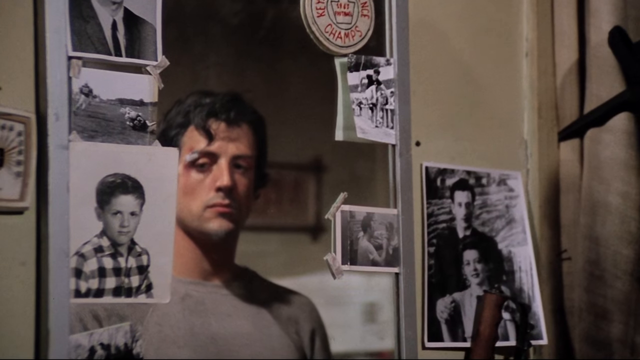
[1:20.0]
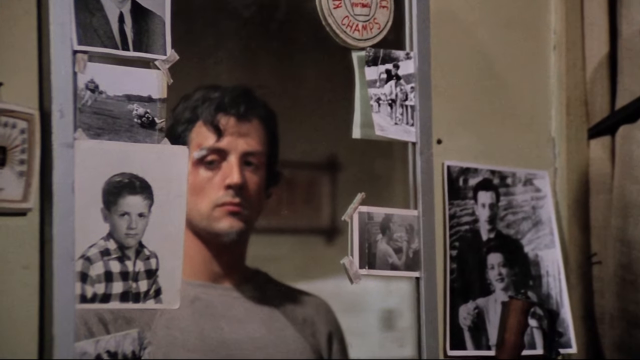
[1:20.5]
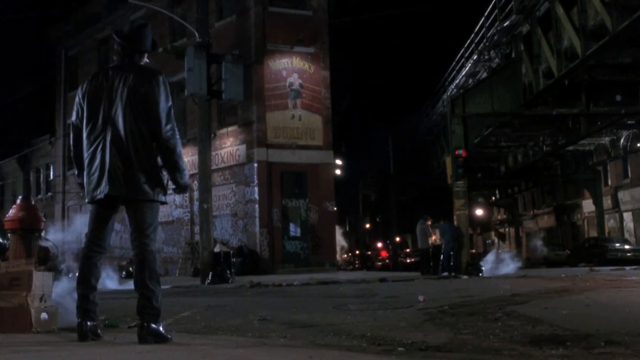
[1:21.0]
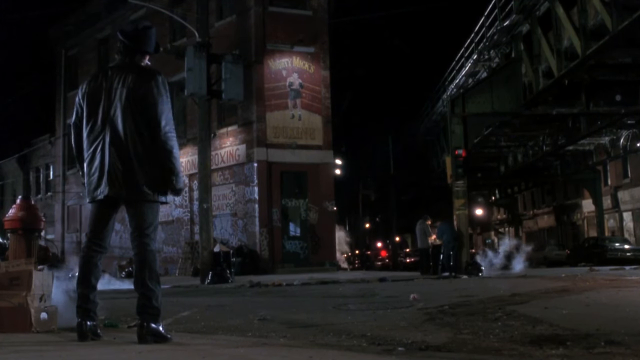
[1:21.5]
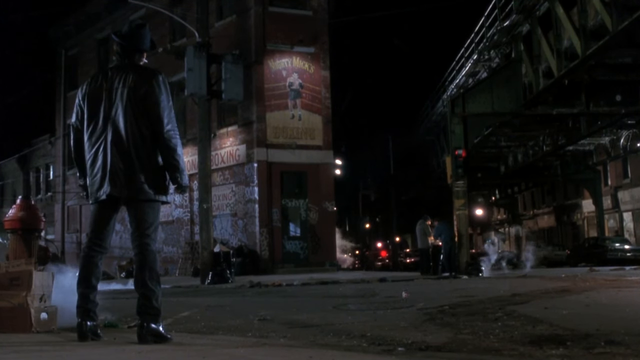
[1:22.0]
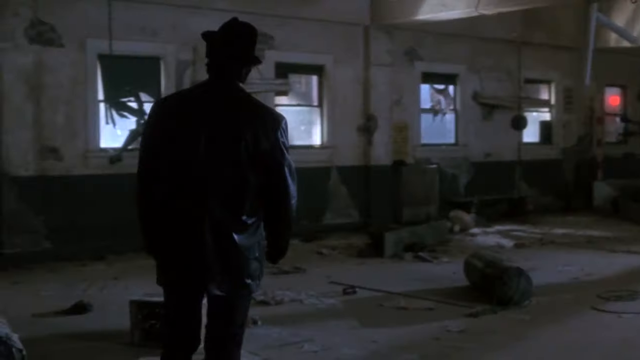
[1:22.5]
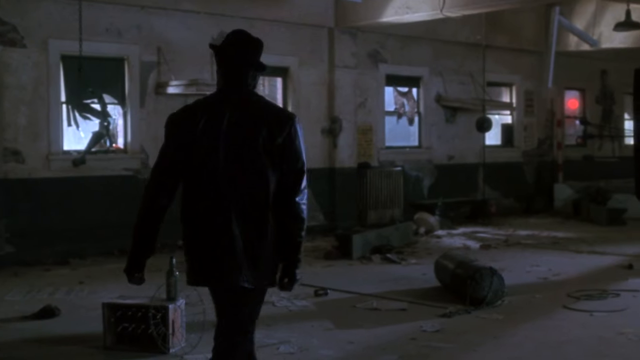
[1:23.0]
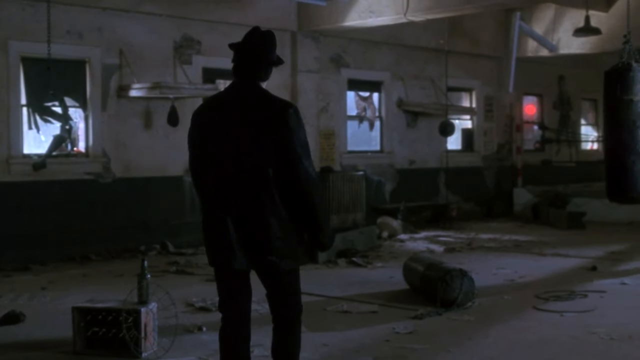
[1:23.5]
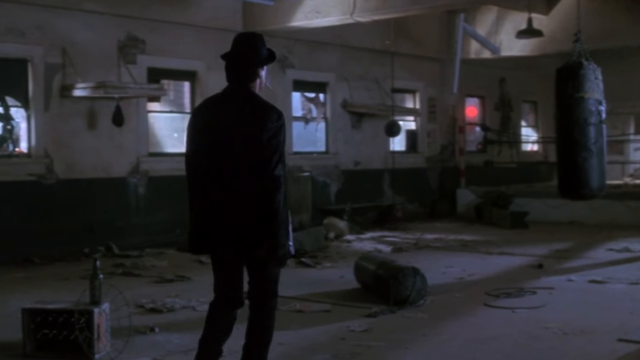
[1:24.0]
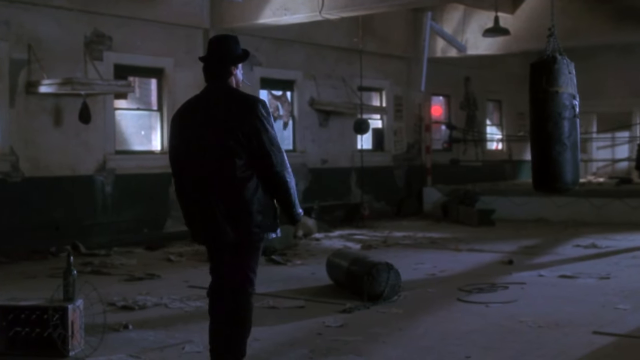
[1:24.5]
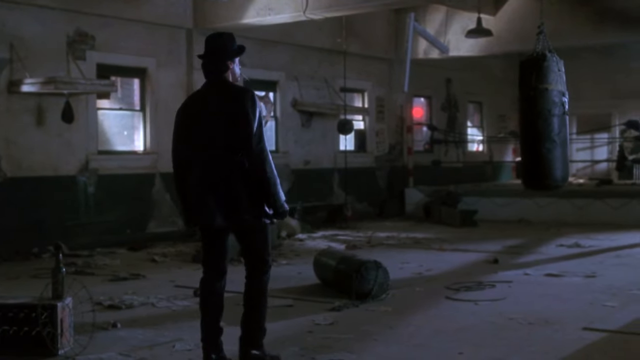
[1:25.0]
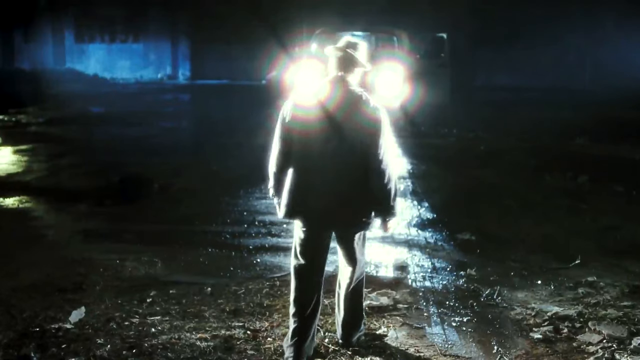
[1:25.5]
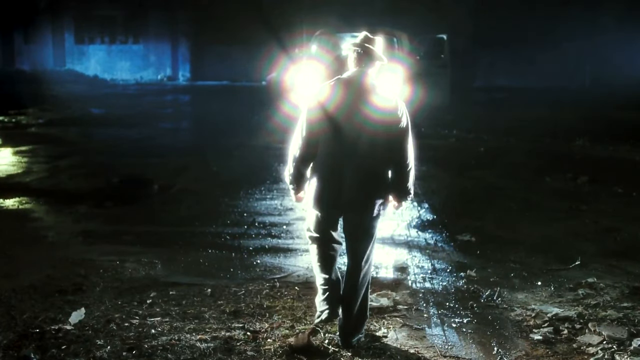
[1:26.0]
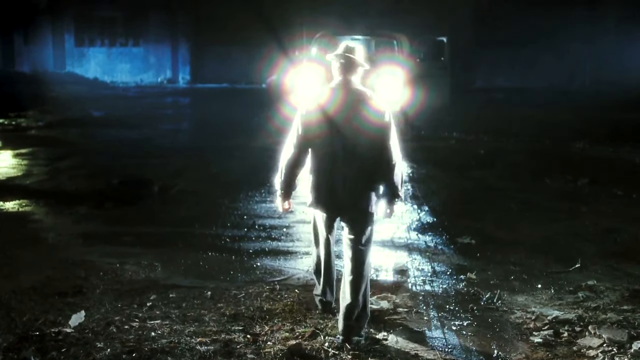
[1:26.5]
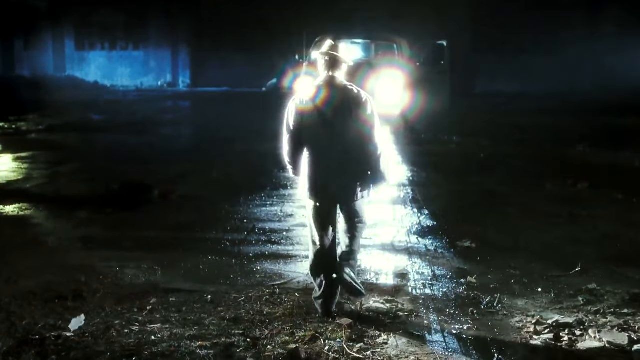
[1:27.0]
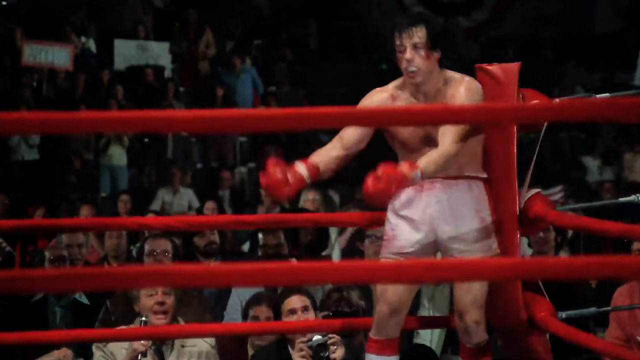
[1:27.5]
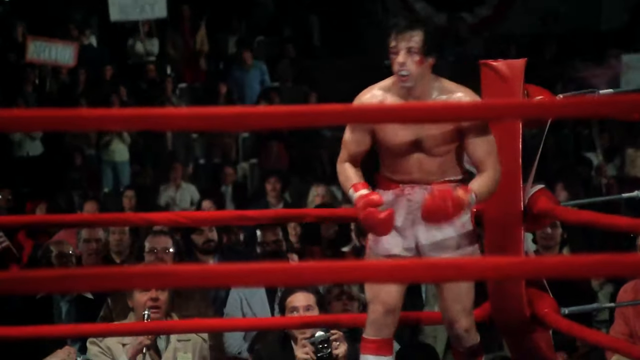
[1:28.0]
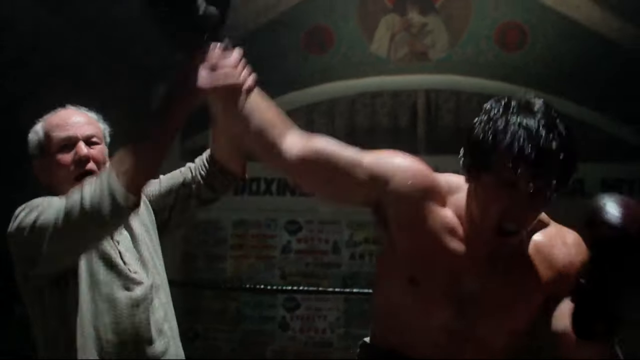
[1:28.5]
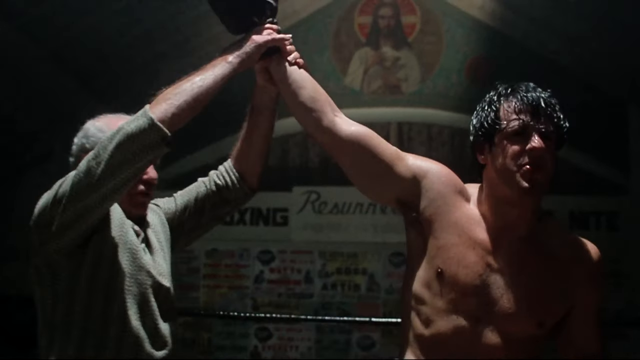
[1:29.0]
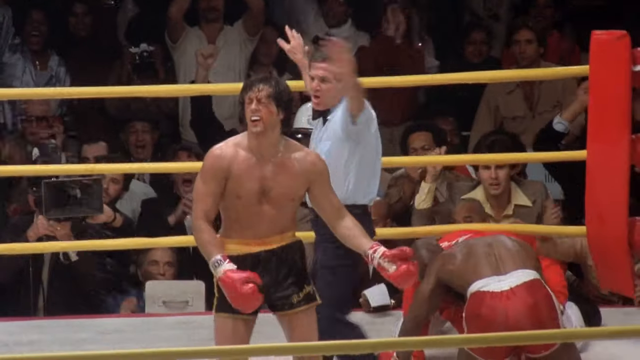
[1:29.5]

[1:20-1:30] Pictures of the main character zoom in, showing him as a little boy and as he grew up. The focus then moves to the man walking towards a ring at night. He walks along a road at night and on towards another area as the sun rises, its light visible. The focus shifts to the man fighting another man in a ring; the fight is shown as intense, and a referee is present. After the fight, the referee holds up the other man's hand, showing him as the winner. It appears to be a movie clip focused on boxing.